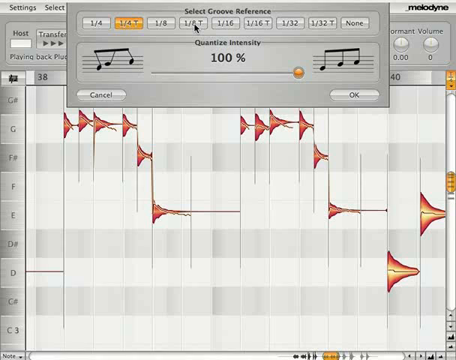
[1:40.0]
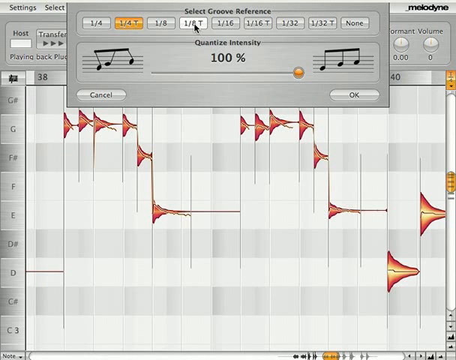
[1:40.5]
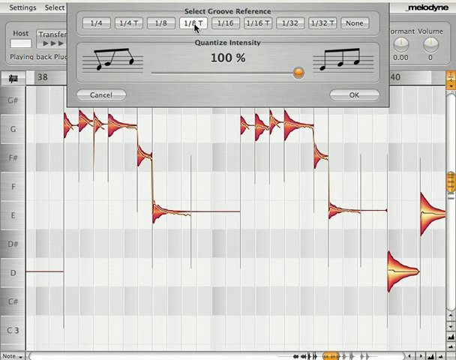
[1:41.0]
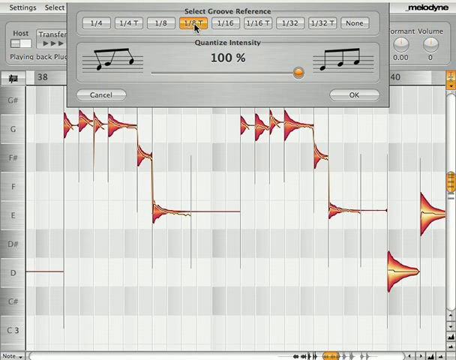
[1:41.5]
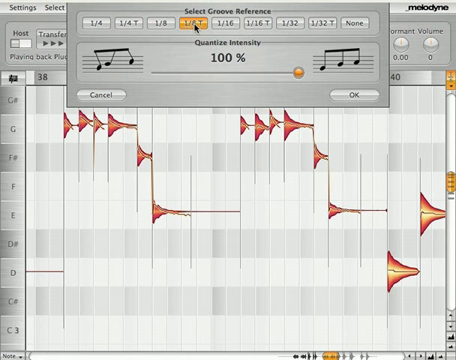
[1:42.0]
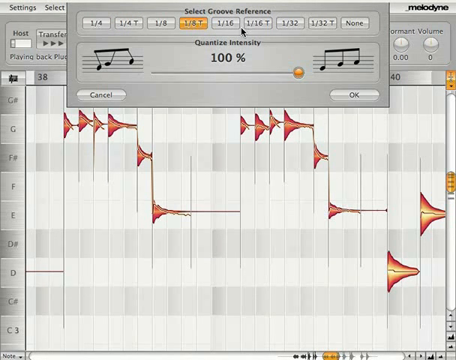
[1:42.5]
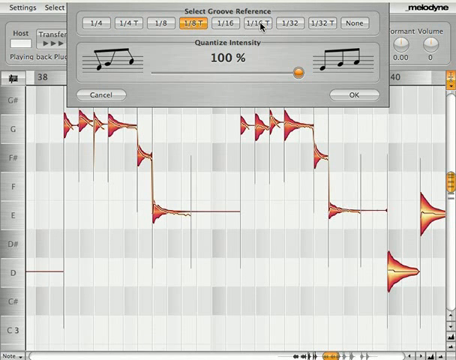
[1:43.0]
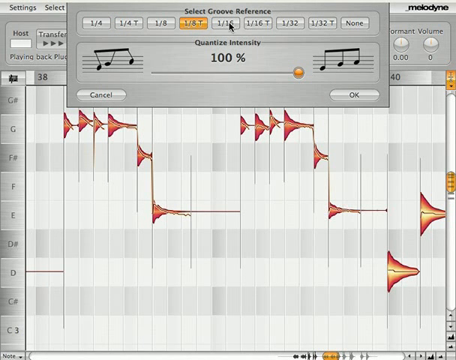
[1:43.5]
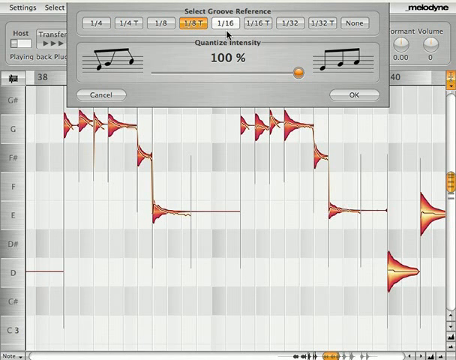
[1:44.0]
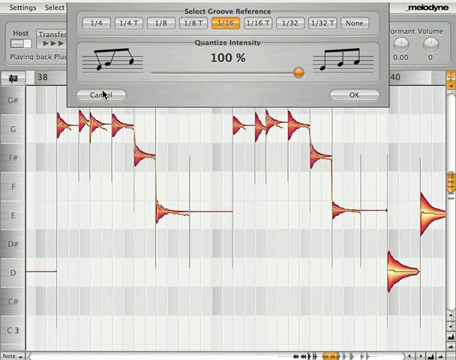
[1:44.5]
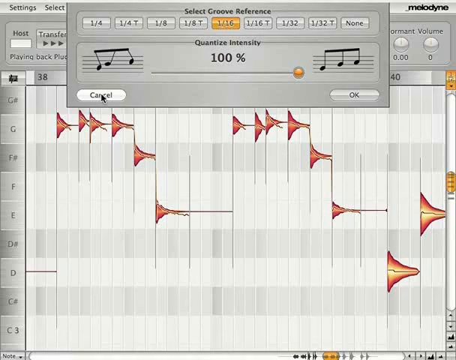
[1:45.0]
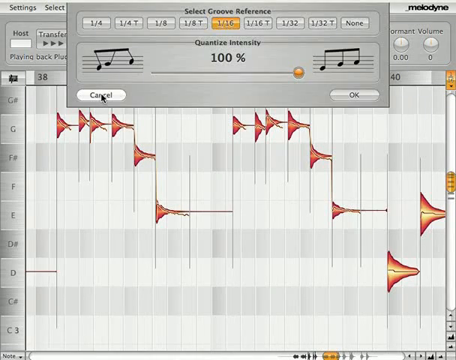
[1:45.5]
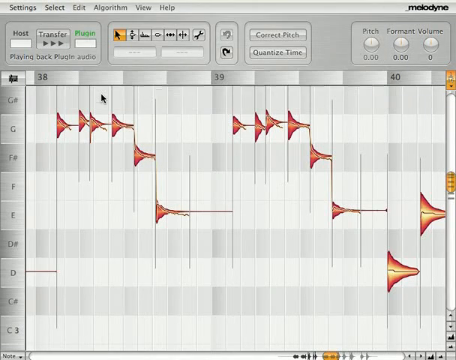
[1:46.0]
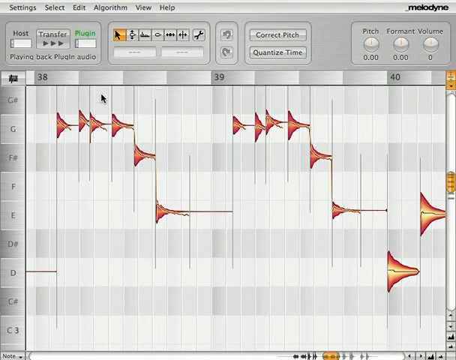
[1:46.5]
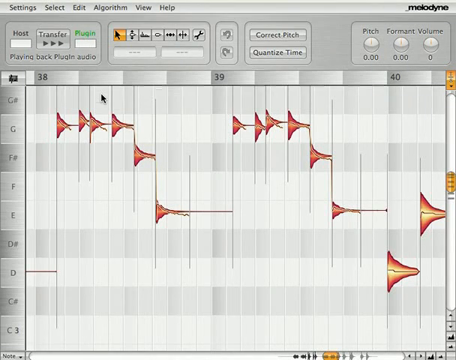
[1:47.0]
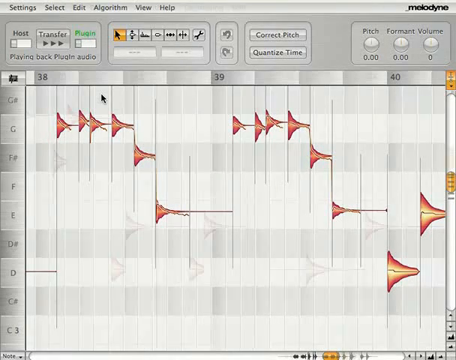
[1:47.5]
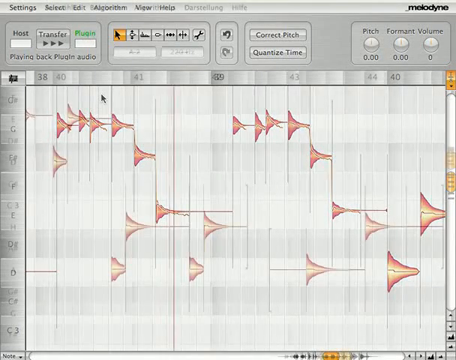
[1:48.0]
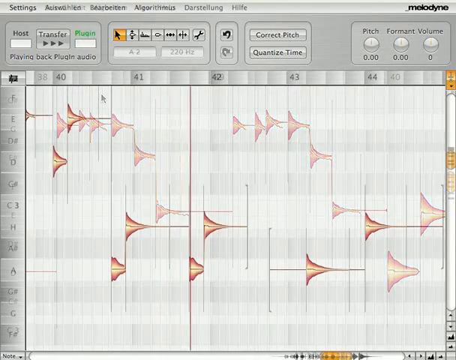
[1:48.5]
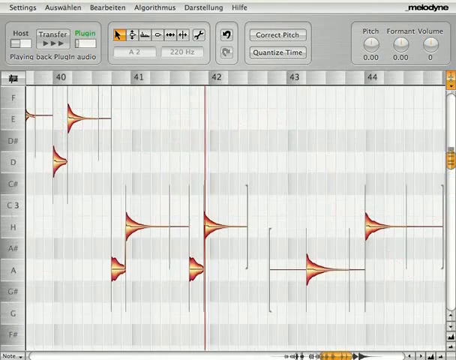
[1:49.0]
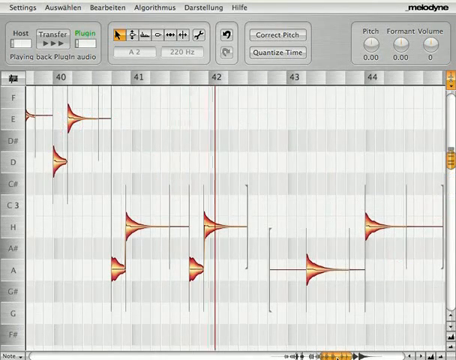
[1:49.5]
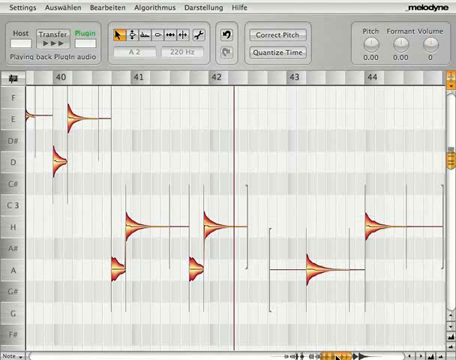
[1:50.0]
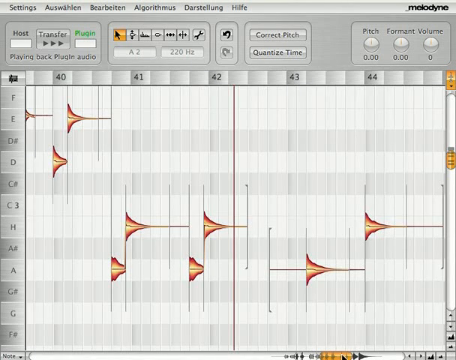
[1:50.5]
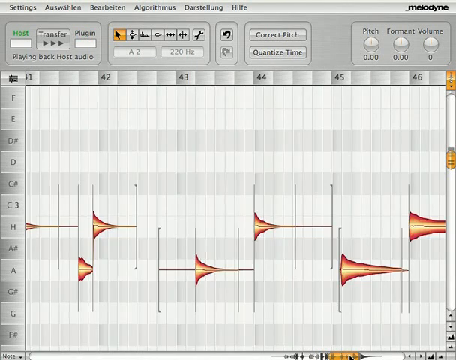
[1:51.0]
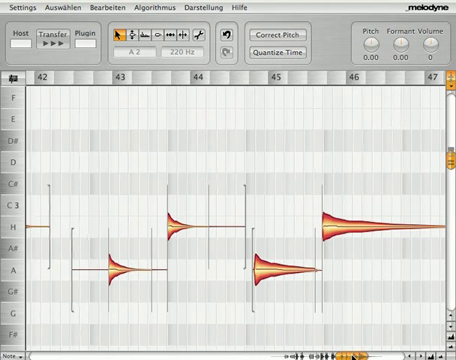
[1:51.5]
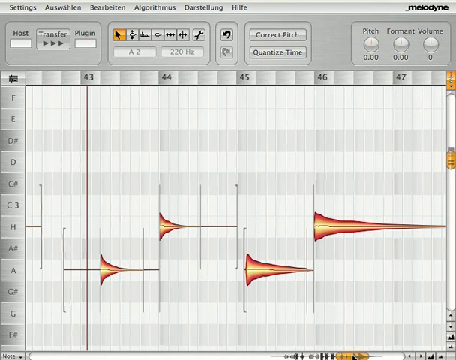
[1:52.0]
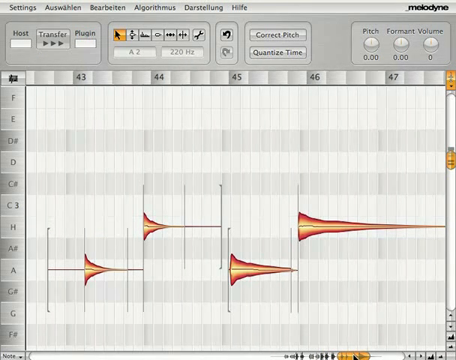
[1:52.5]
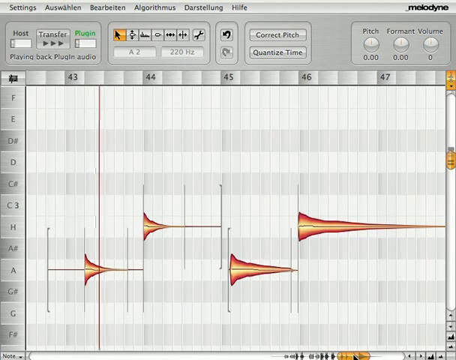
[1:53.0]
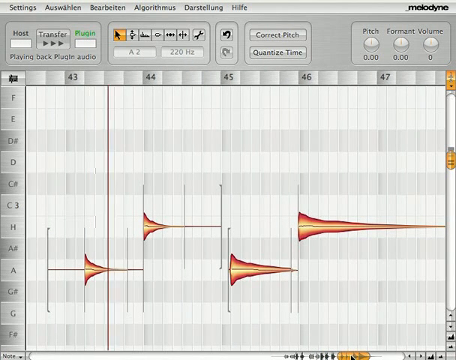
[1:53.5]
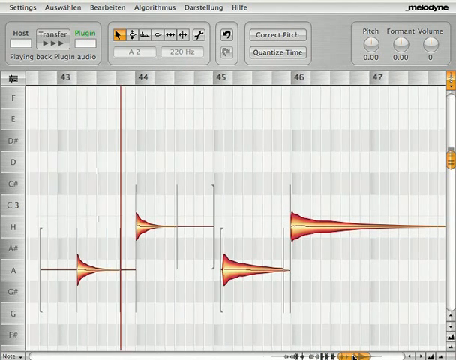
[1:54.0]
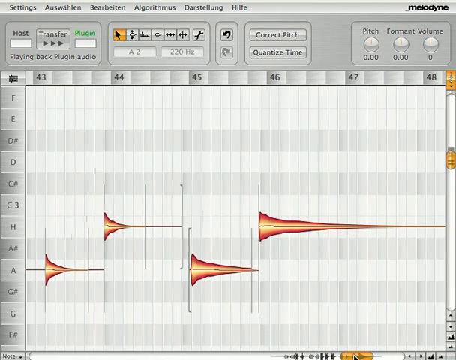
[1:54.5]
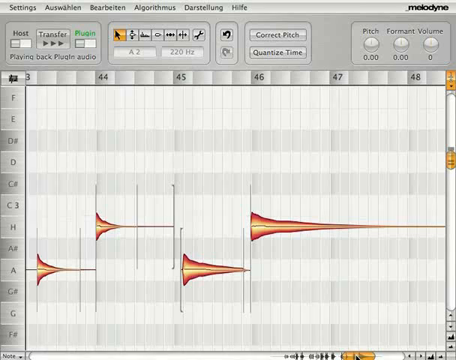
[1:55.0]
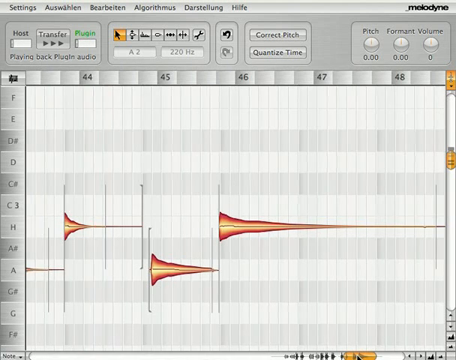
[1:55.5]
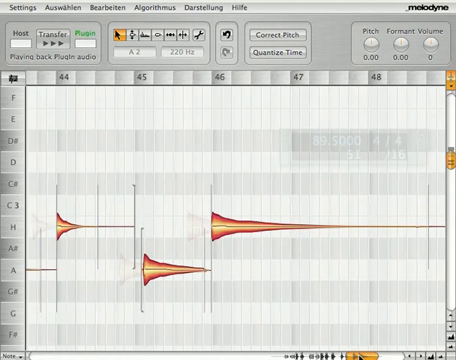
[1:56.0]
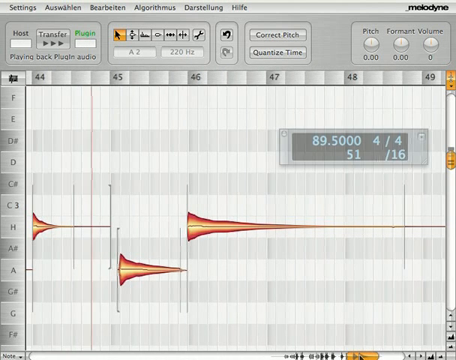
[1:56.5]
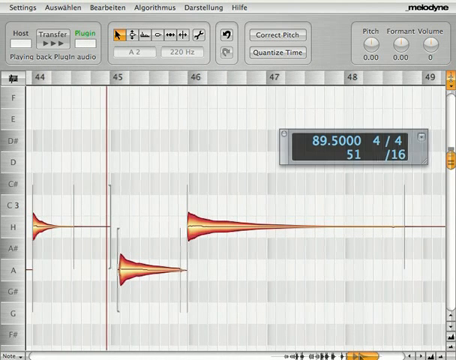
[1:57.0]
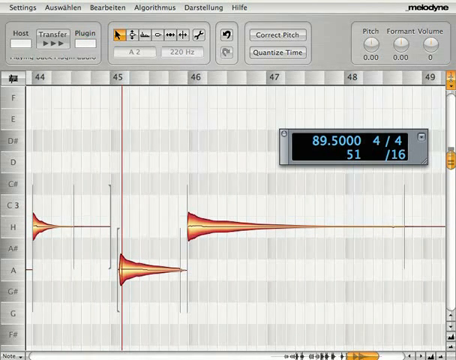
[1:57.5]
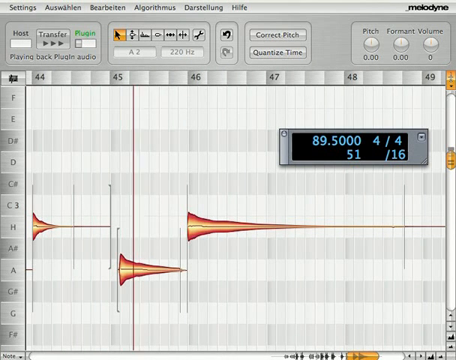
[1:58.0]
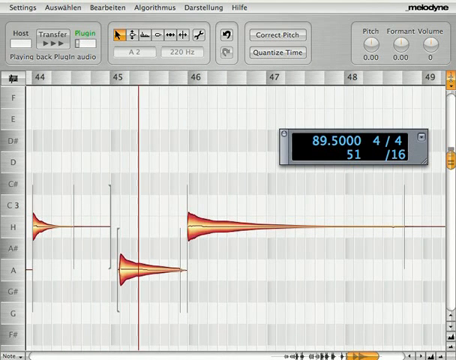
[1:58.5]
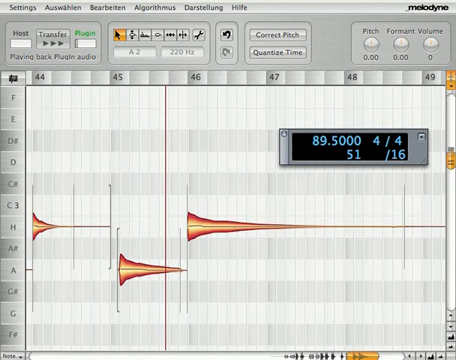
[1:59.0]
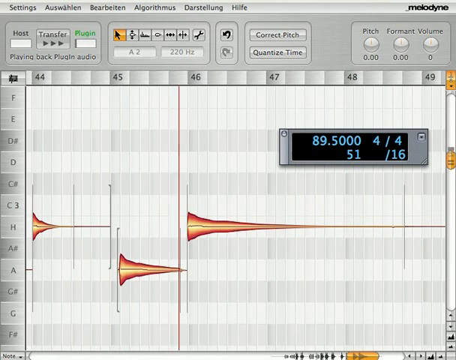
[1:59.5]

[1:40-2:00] After the groove reference is set to 1/4 T, the demonstrator changes it to 1/16 and then presses the cancel button. The track reaches 45 seconds and a reading suddenly appears showing numbers including 89.5 and 4/4. The track continues beyond the 50th second, and right at the end a very long note lasts more than three seconds.